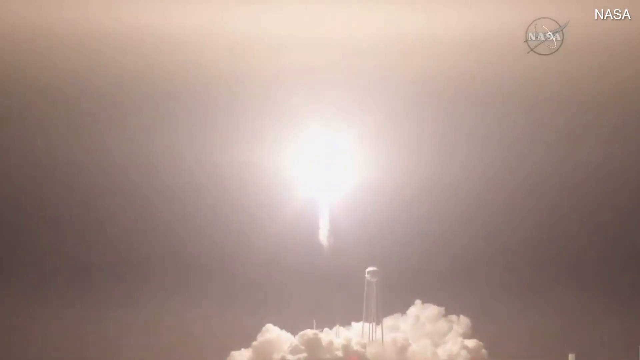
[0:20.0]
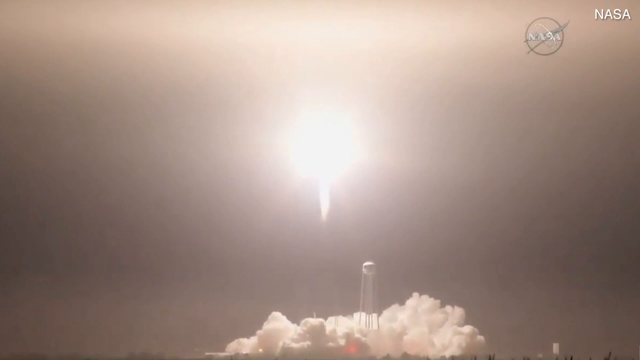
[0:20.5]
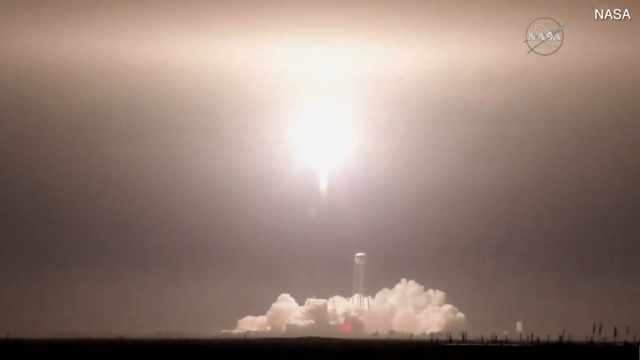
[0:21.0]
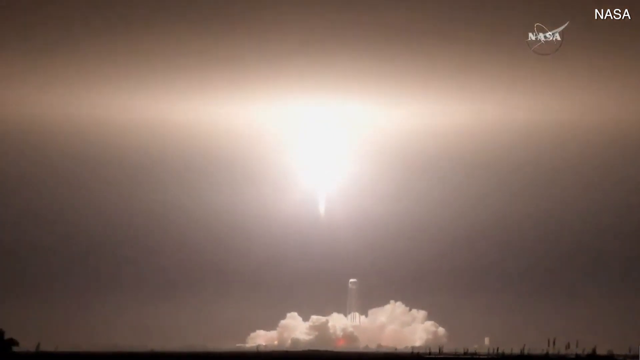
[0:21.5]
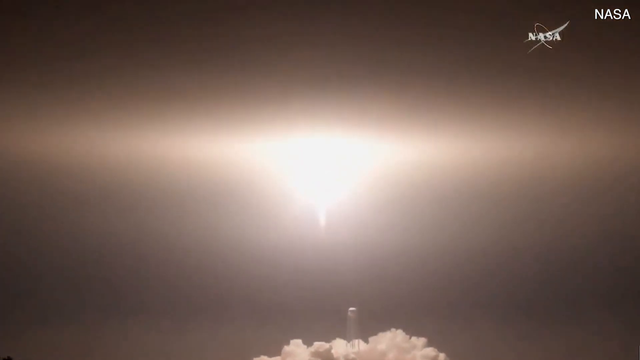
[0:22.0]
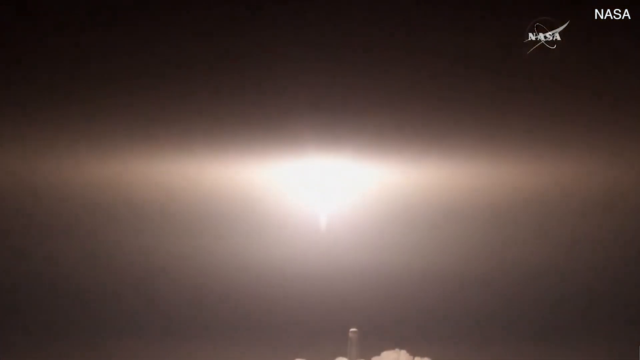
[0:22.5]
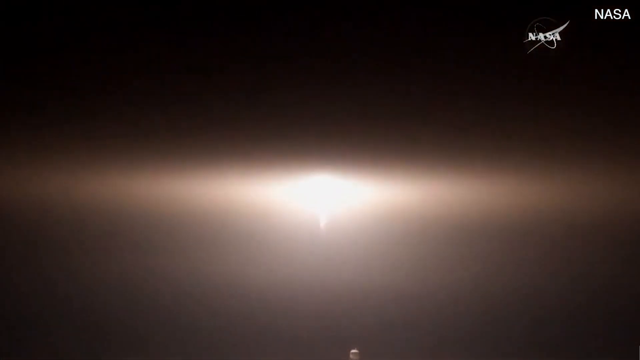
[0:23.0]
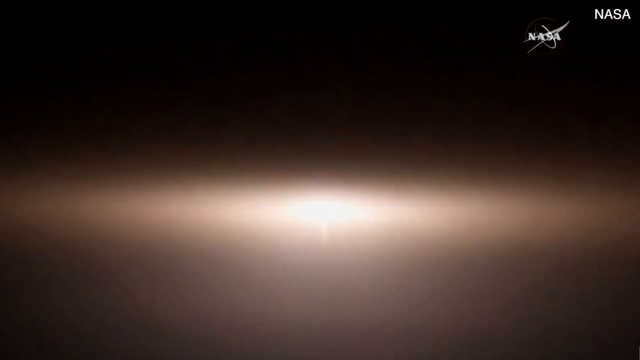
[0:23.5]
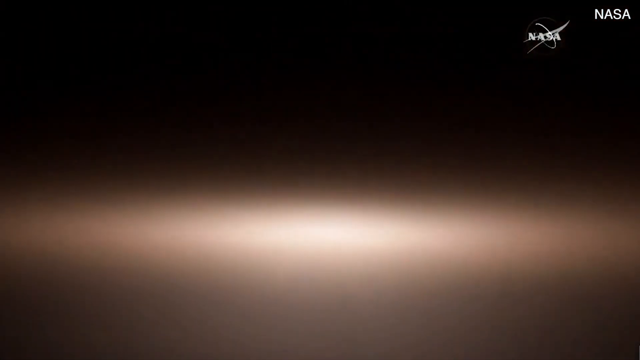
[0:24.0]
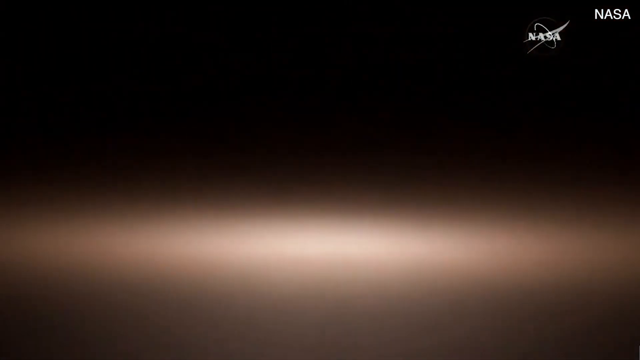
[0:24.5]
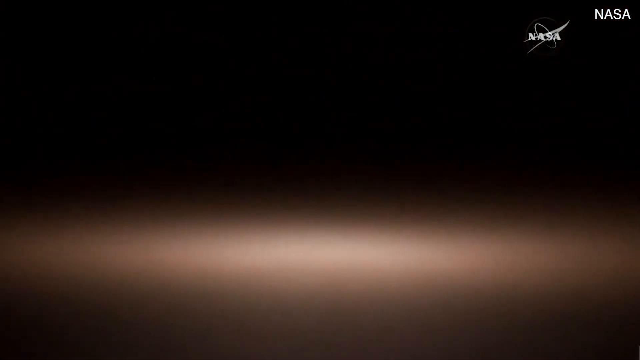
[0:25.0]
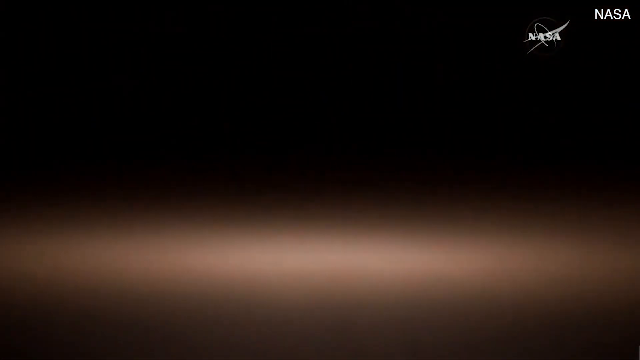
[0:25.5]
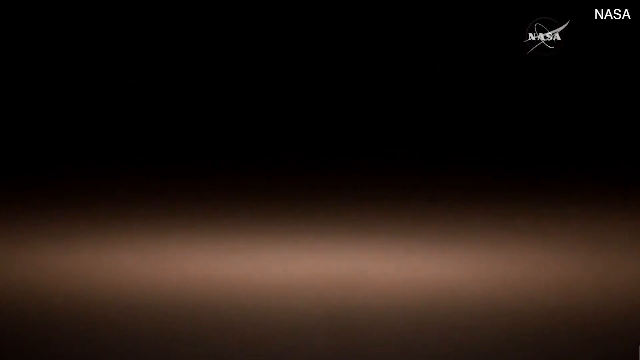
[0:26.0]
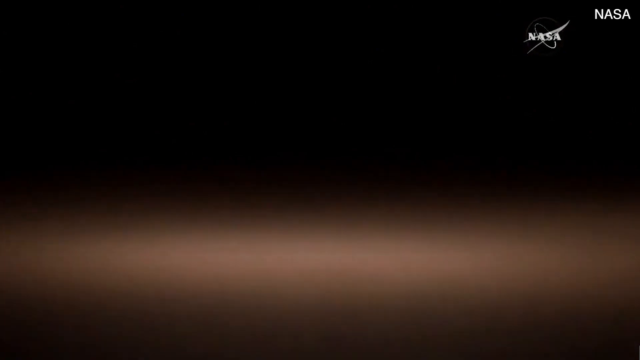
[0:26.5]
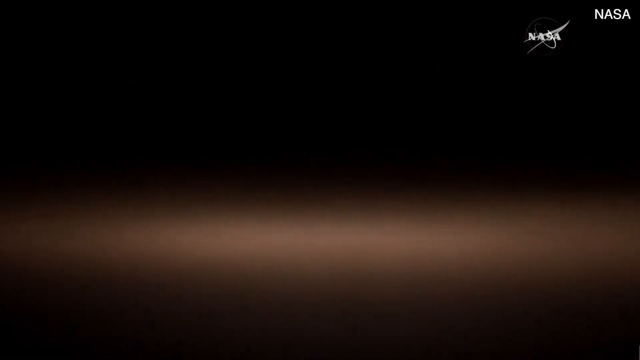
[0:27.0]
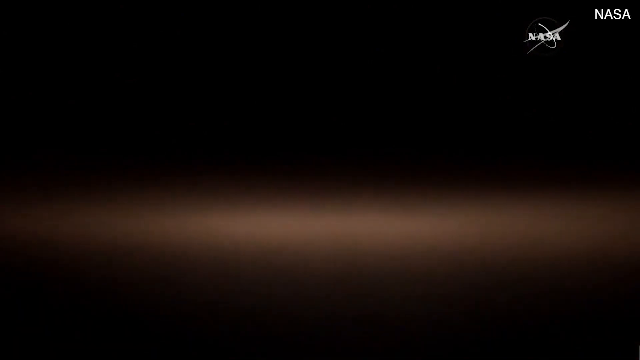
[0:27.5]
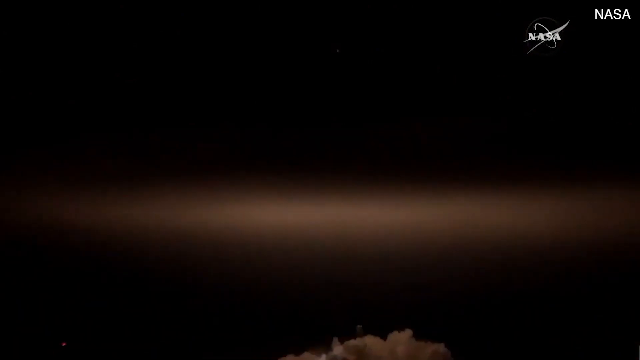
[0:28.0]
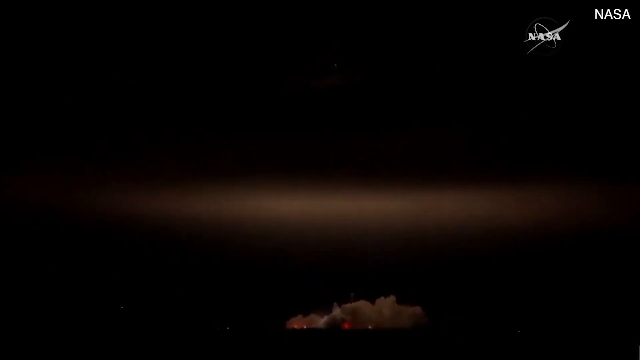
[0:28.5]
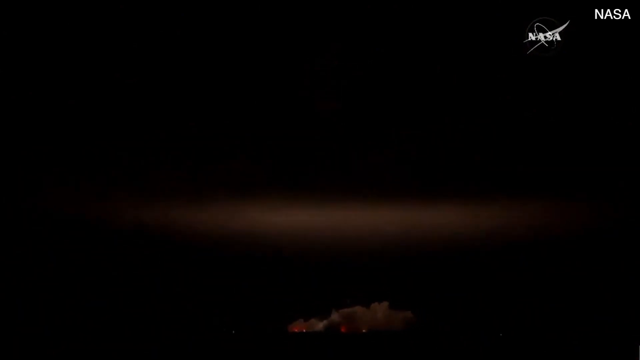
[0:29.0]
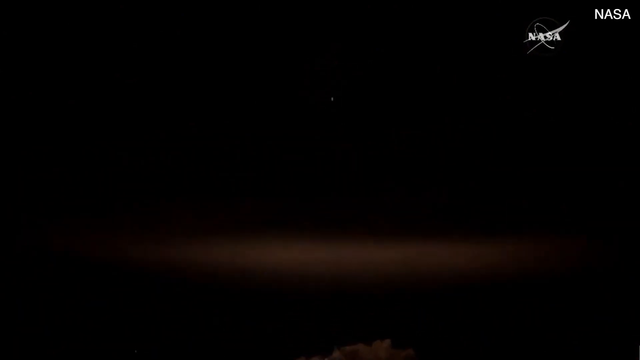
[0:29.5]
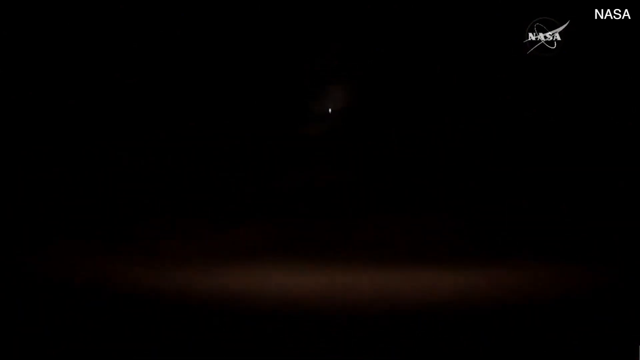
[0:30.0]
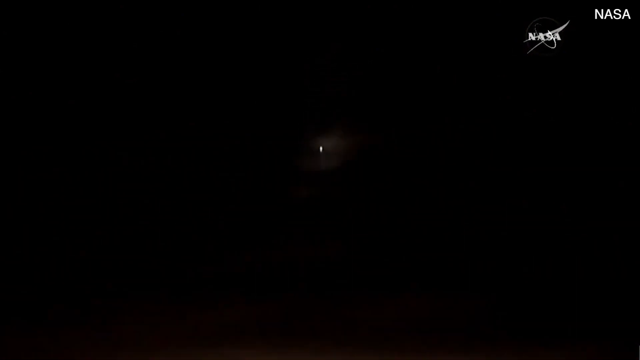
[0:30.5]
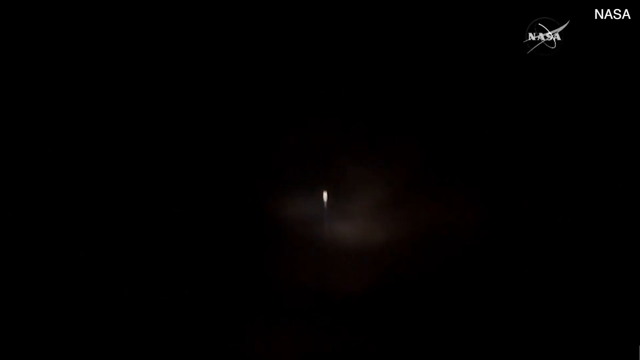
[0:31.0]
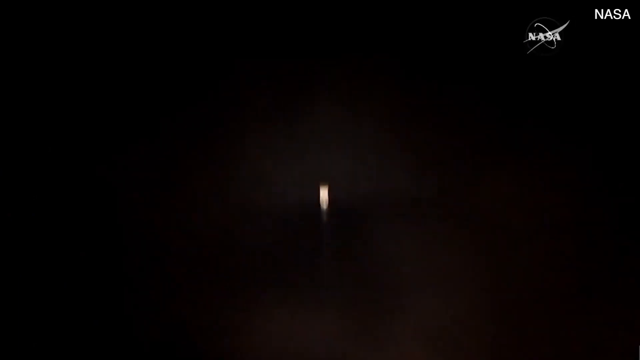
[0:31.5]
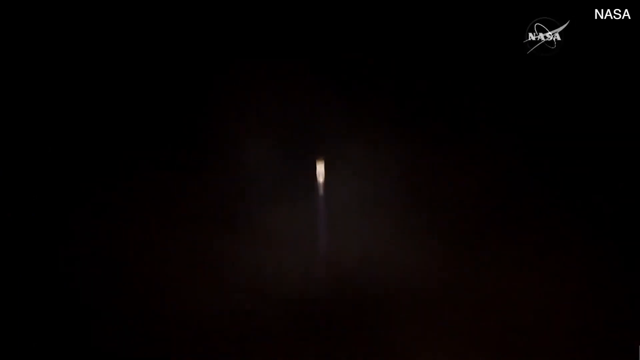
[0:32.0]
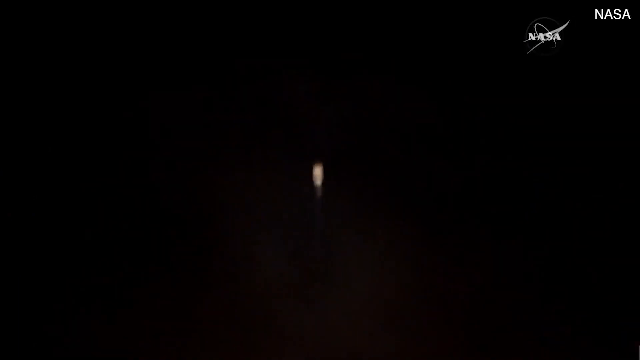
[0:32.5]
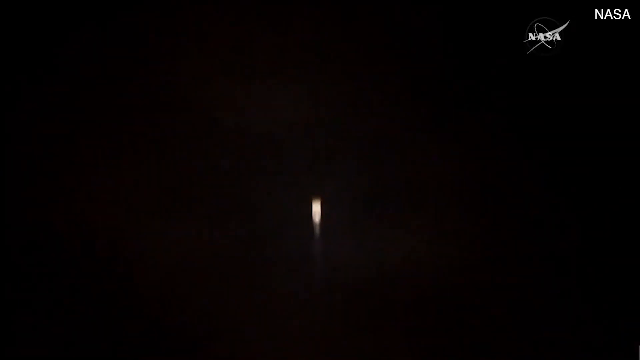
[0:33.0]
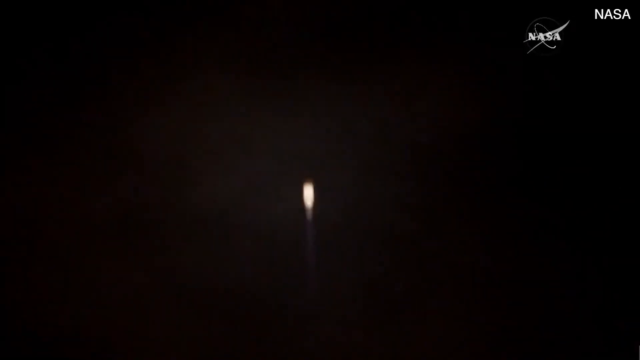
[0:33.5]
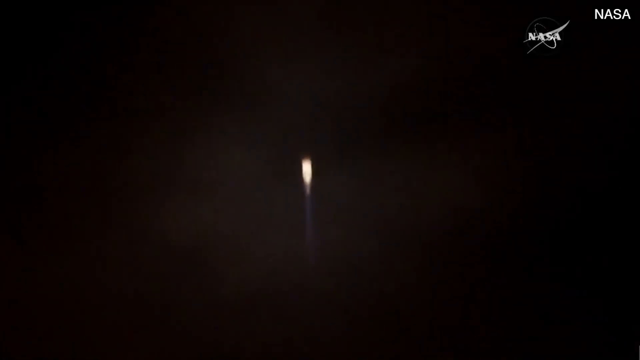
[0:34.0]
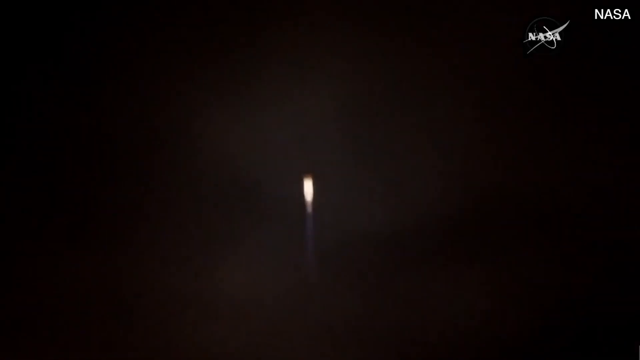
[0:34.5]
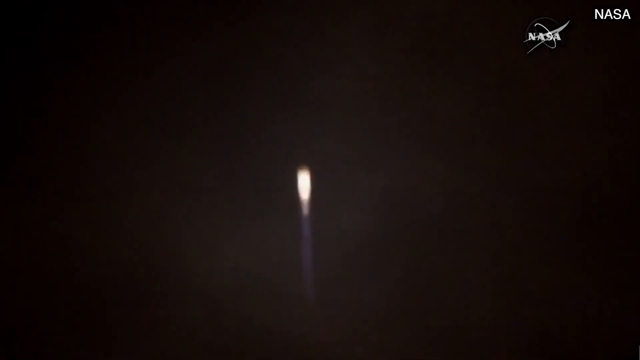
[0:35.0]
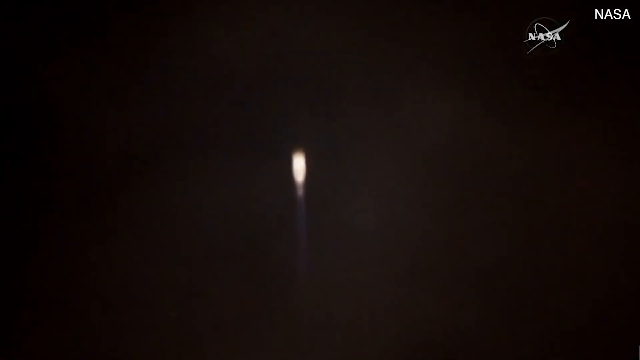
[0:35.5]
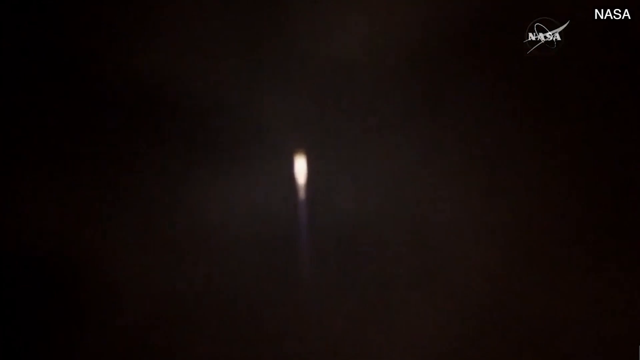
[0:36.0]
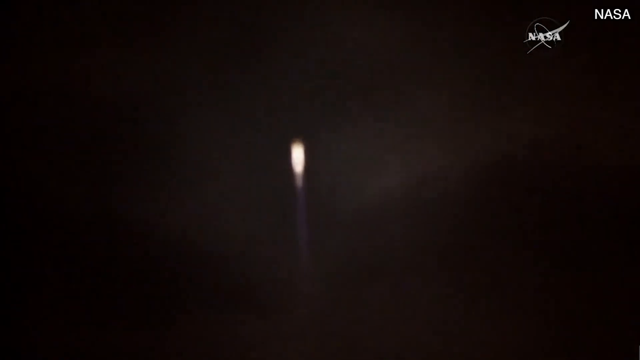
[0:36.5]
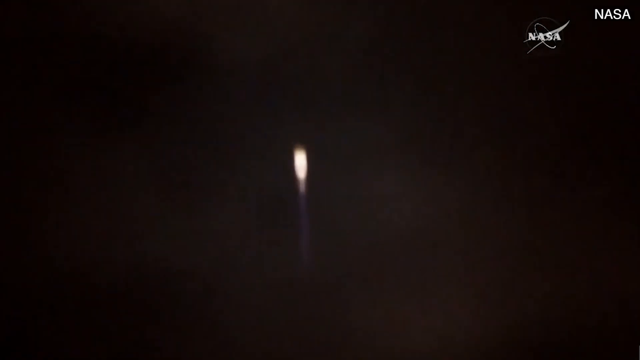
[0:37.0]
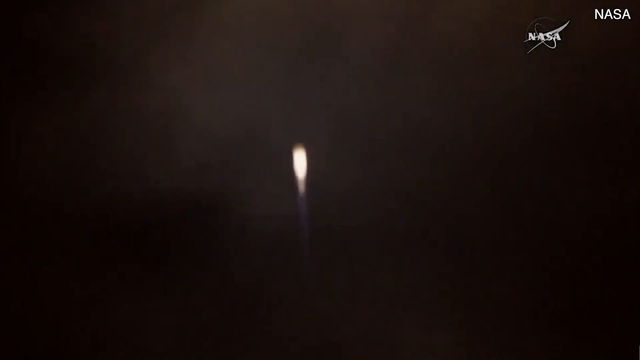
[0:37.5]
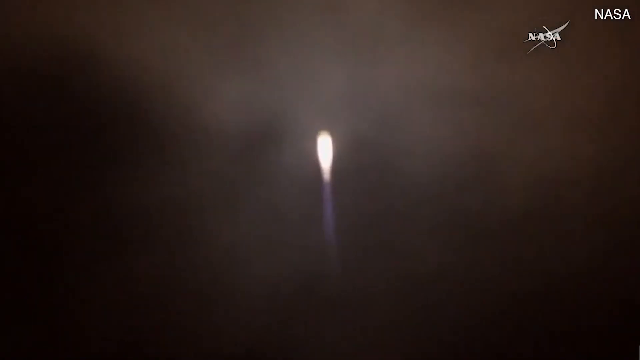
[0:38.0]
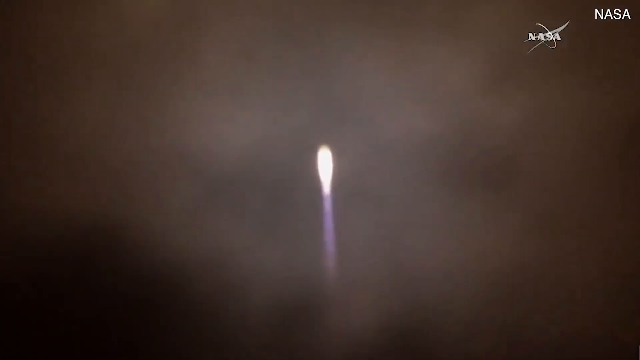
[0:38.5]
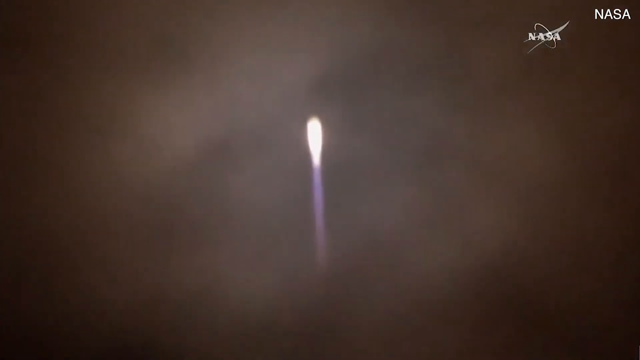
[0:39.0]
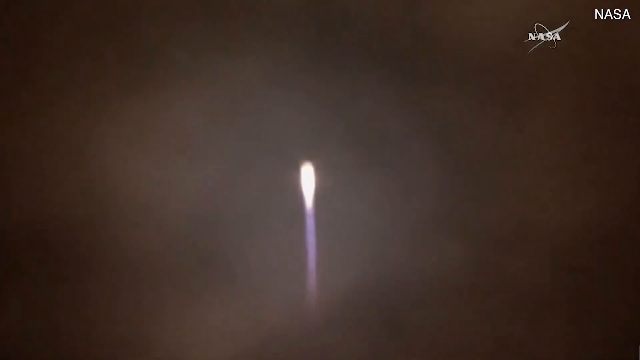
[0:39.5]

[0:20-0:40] Something blazes up into the night sky in a blast, with bright red around it against the background.